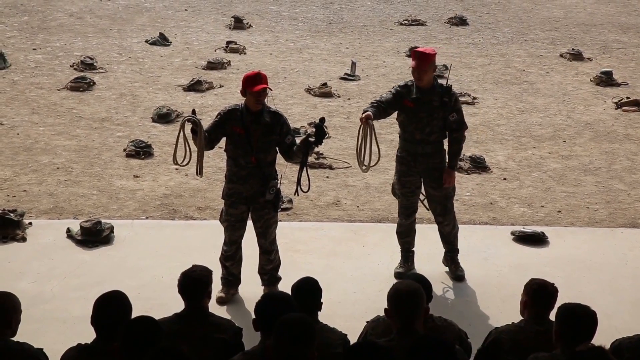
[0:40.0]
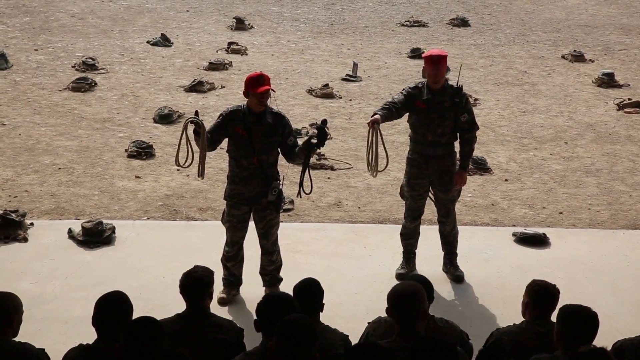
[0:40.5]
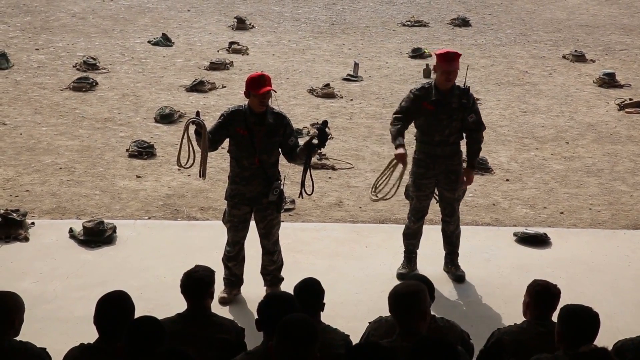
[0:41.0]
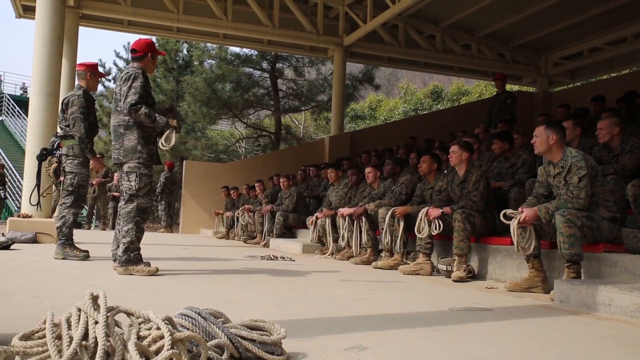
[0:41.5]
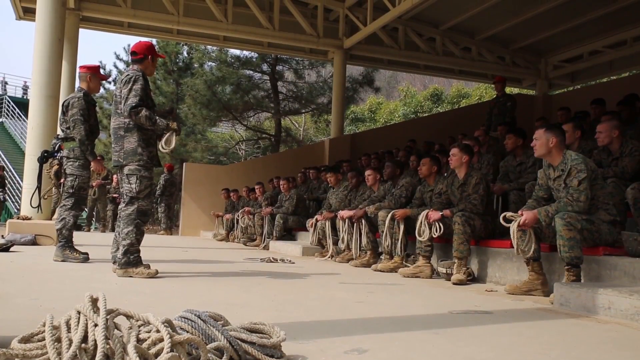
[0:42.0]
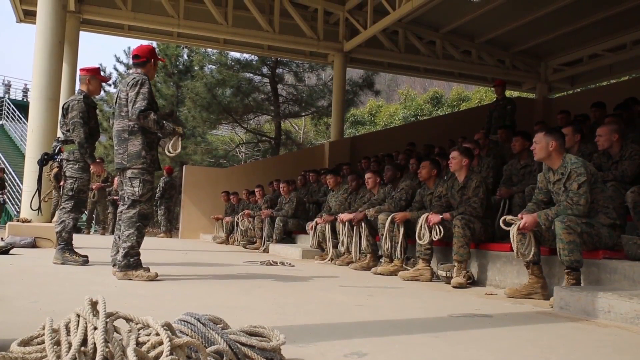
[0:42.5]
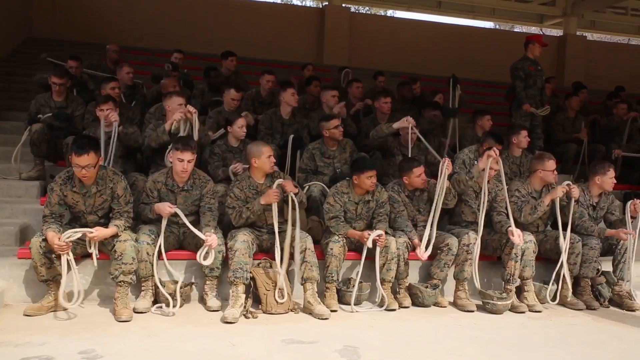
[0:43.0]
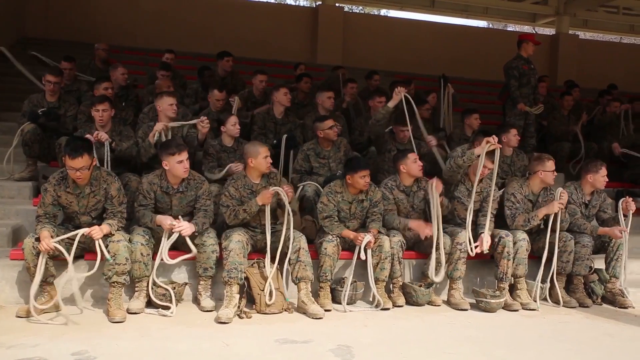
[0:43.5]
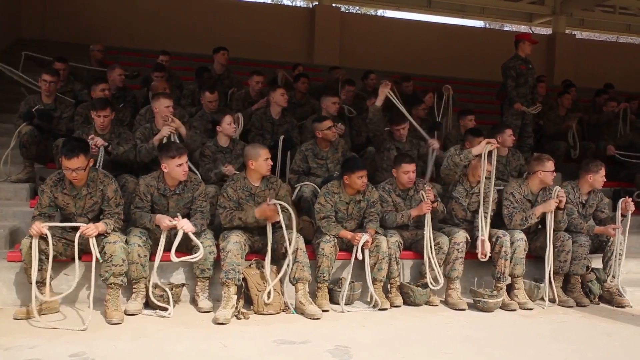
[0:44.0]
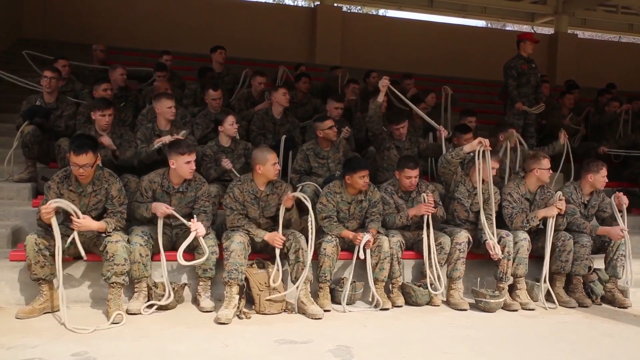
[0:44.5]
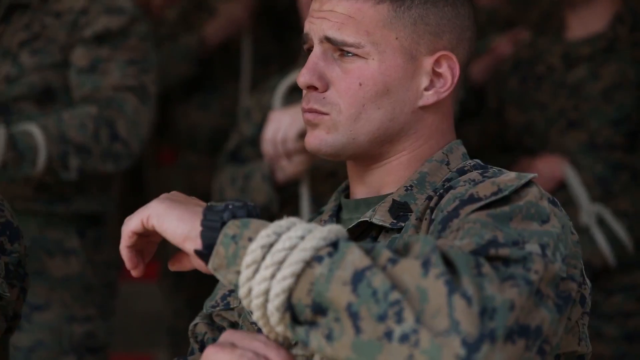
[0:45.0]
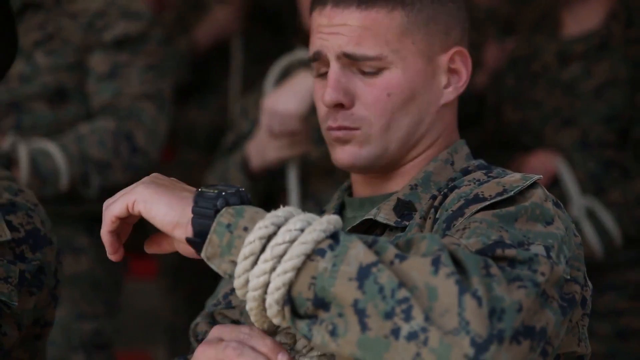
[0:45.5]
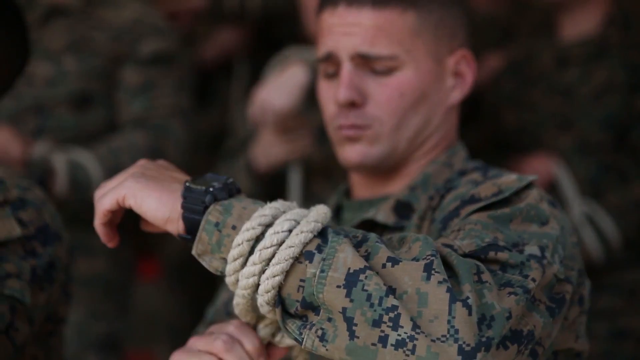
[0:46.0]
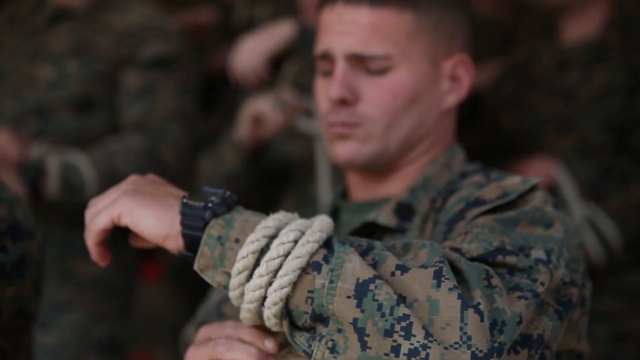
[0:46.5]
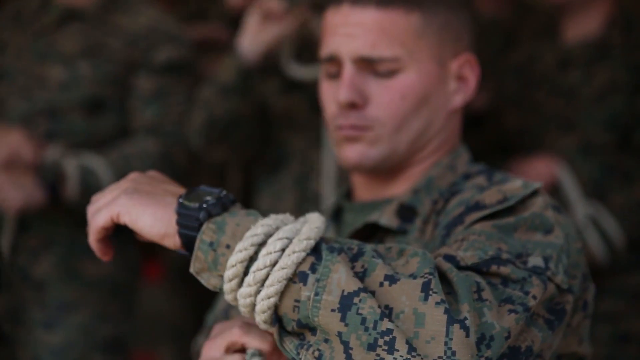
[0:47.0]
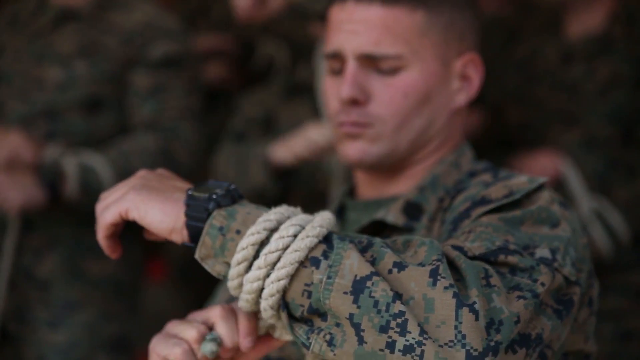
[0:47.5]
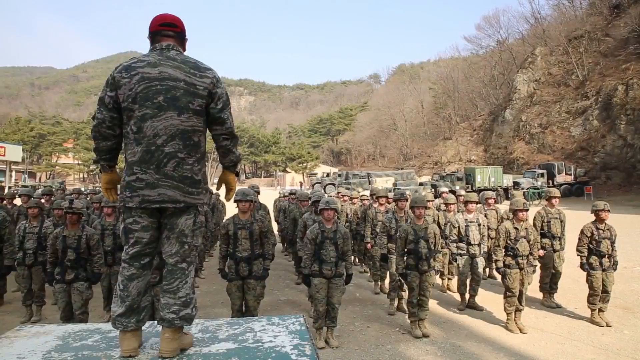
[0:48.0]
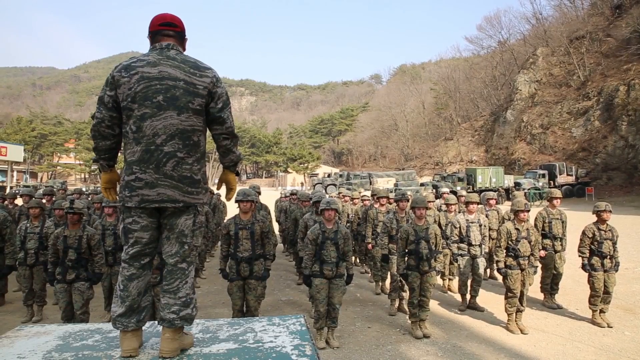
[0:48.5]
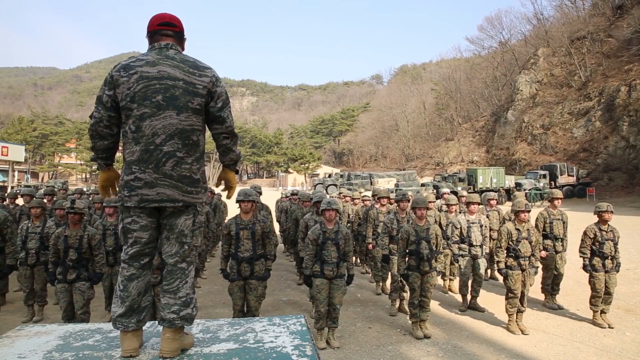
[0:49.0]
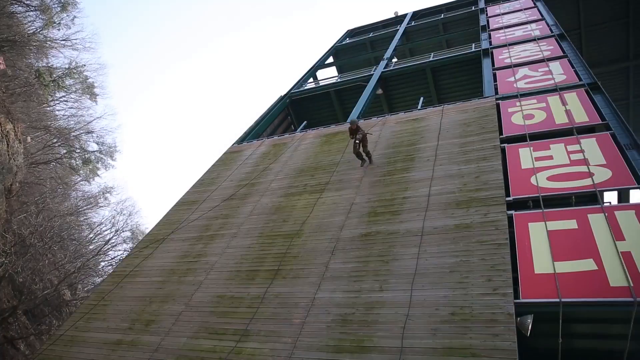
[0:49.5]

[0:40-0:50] The two soldiers in red caps continue giving an instructional demonstration to a group of soldiers in the foreground. They stand on a platform in front of the parade ground, facing the group. The one on the right of the screen holds a rope bunched and looped in his left hand, and the other man holds ropes looped in both hands. A side shot shows the men sitting and watching the instructors from a tiered seating area that is under cover, with trees to the side of the structure, and the two instructors with ropes. The men sitting in the front row of the stand also have ropes in their hands, as do all the other soldiers in the stand. Their helmets are at their feet. A close-up shows a soldier looping the rope around his right arm. Then an instructor in a red hat stands on a box or raised area, wearing yellow gloves. In front of him, soldiers stand in file on the parade ground, with trucks in the background.